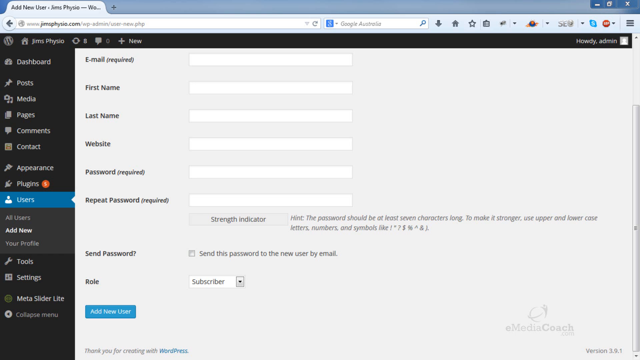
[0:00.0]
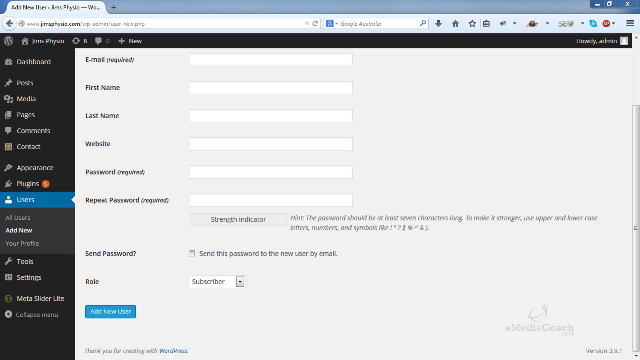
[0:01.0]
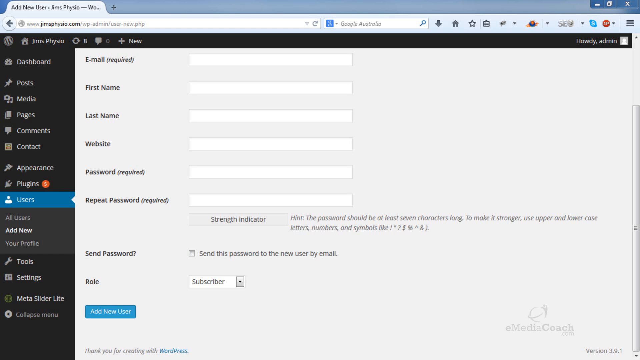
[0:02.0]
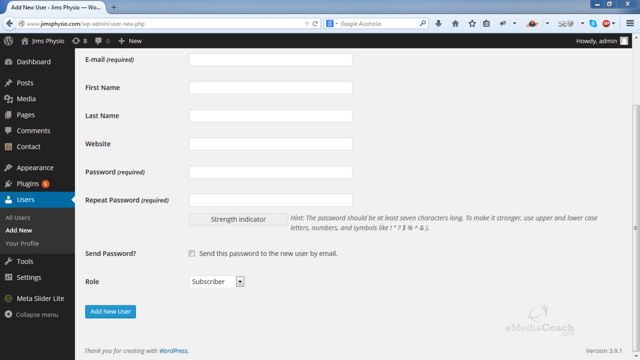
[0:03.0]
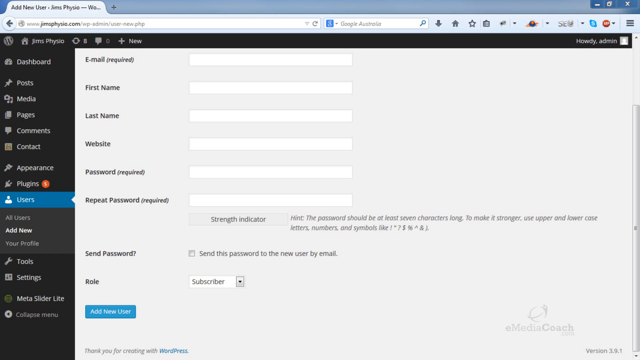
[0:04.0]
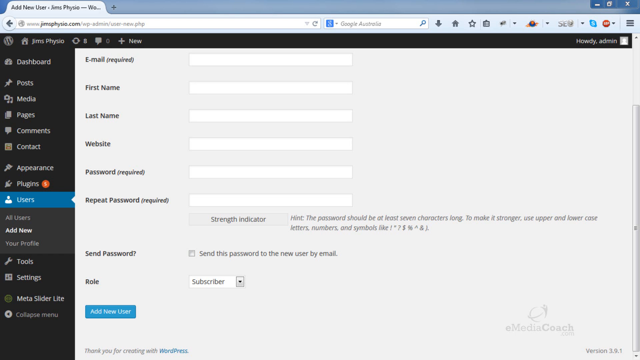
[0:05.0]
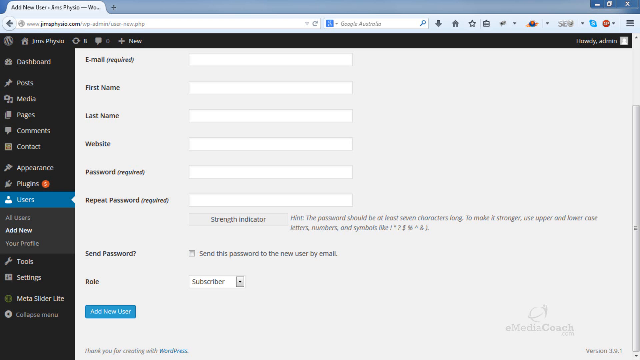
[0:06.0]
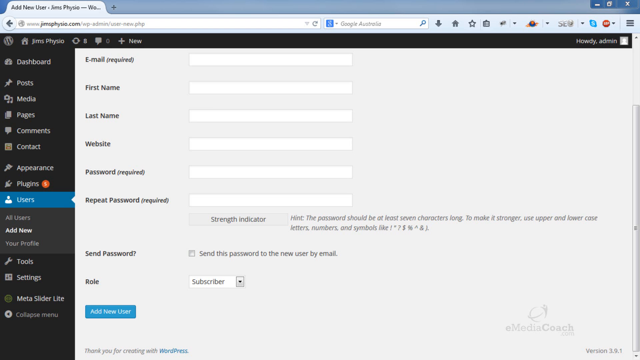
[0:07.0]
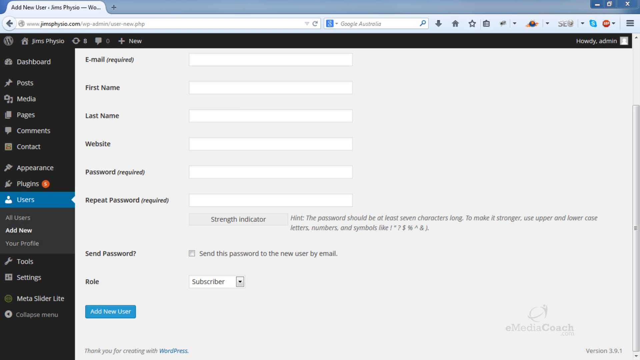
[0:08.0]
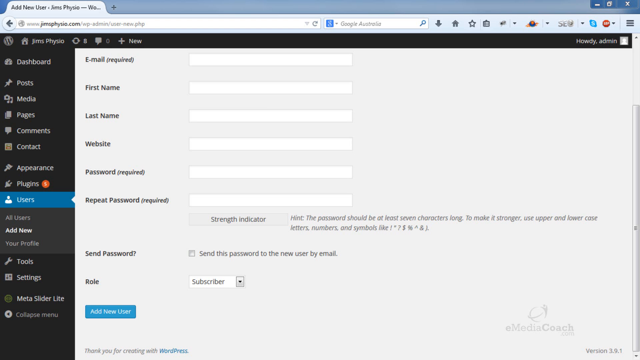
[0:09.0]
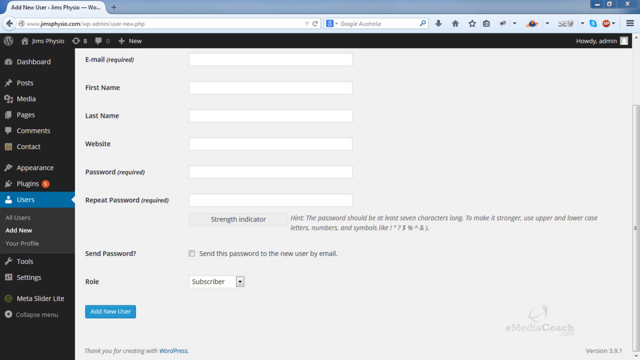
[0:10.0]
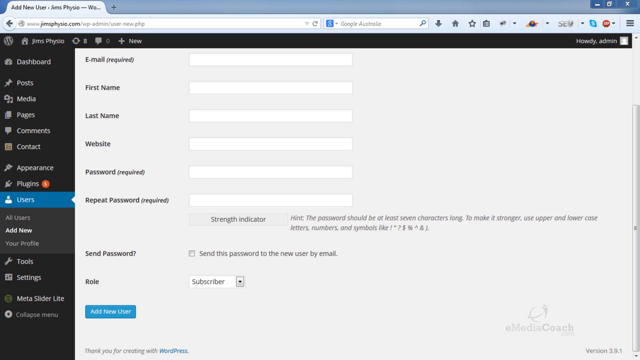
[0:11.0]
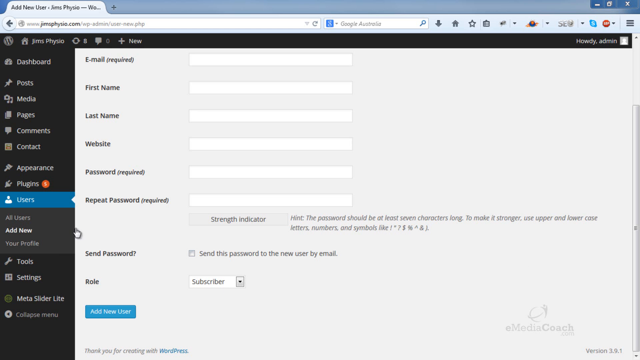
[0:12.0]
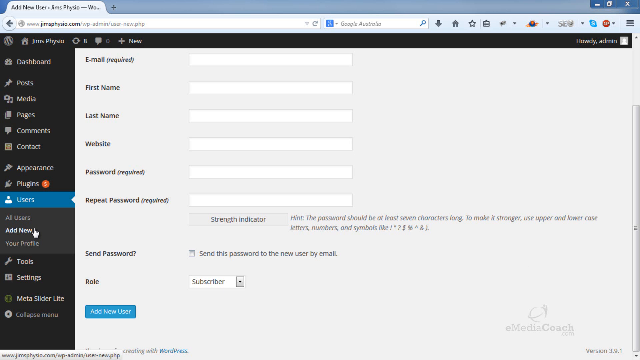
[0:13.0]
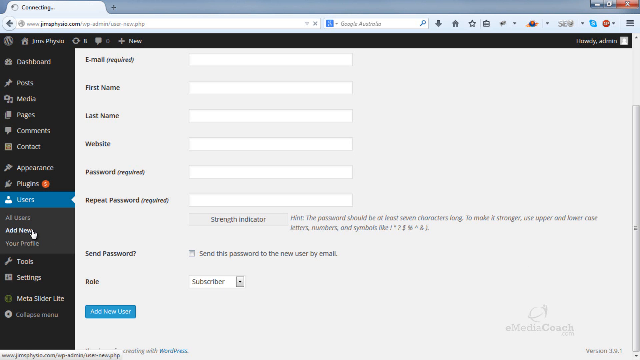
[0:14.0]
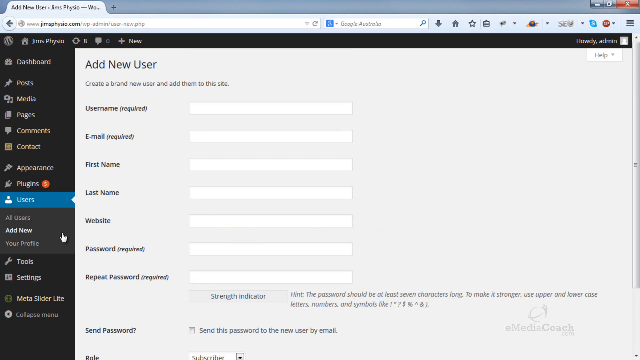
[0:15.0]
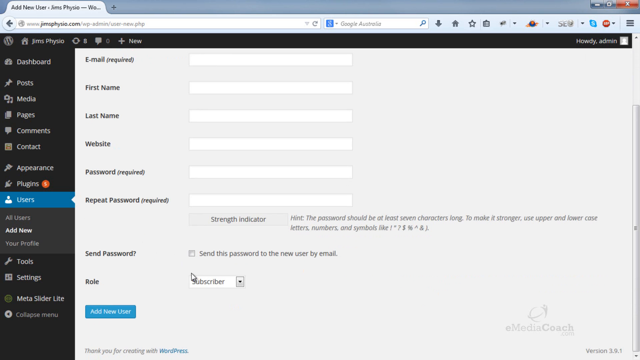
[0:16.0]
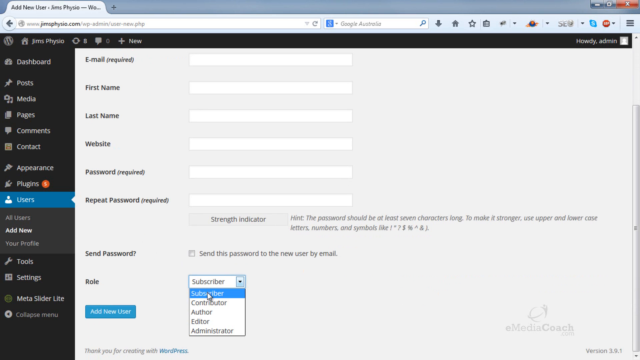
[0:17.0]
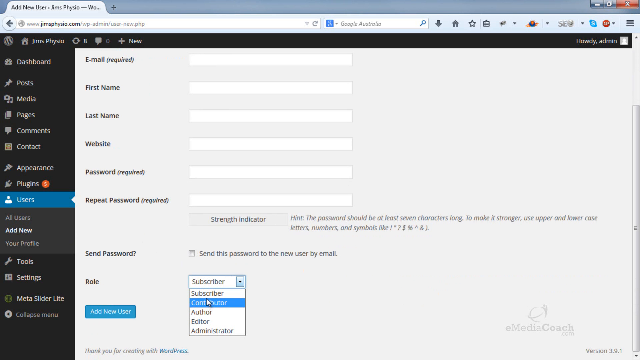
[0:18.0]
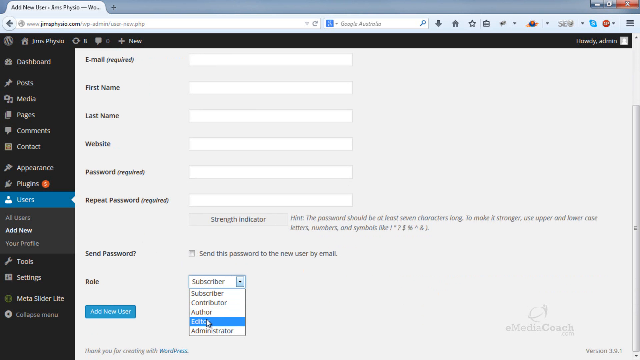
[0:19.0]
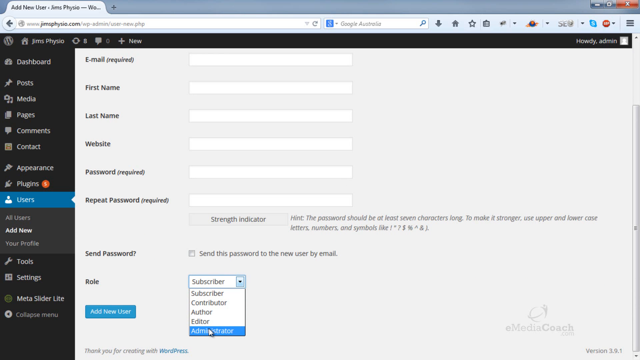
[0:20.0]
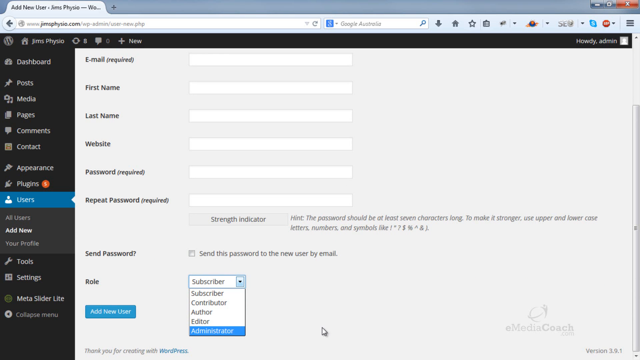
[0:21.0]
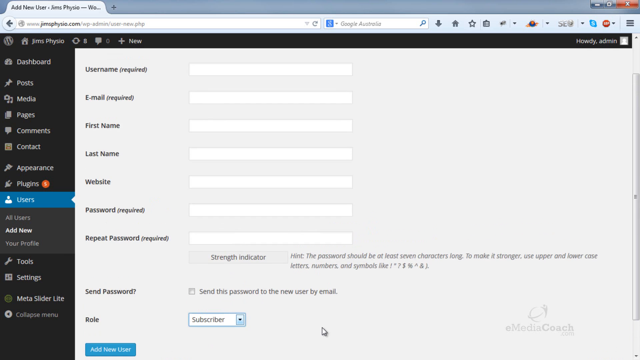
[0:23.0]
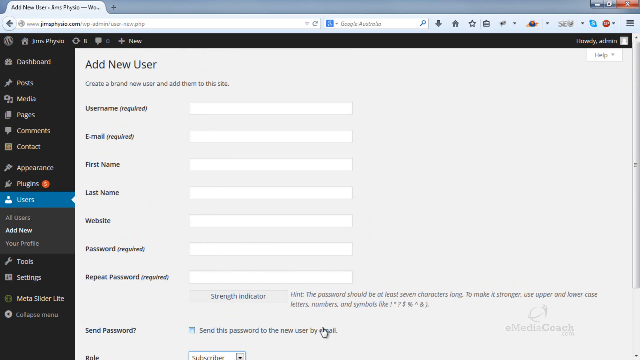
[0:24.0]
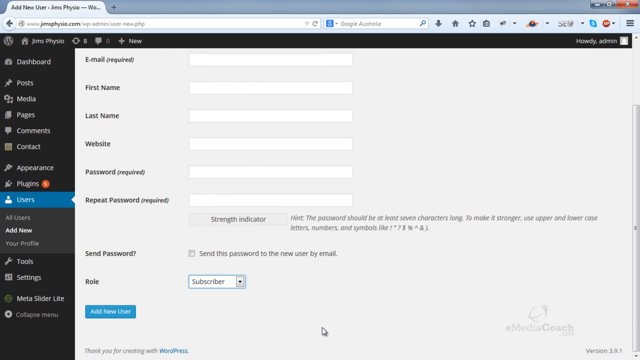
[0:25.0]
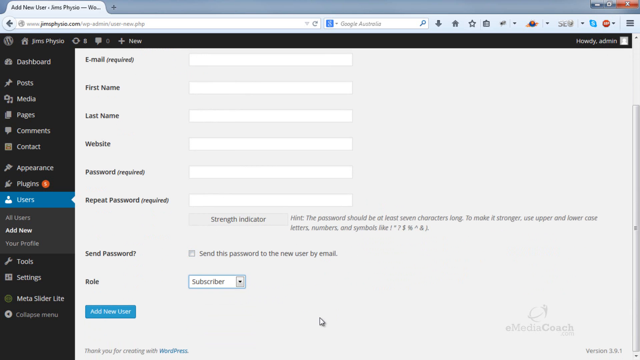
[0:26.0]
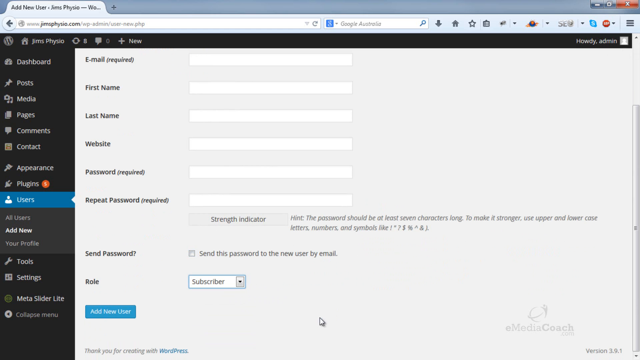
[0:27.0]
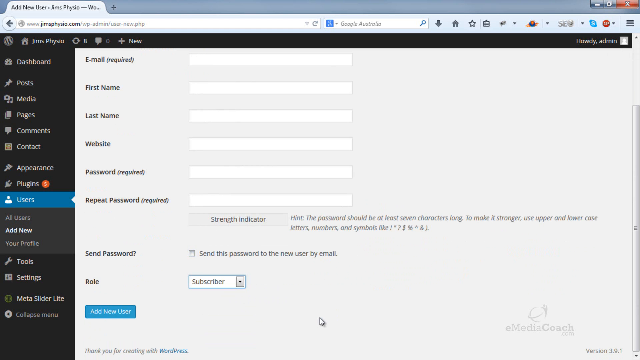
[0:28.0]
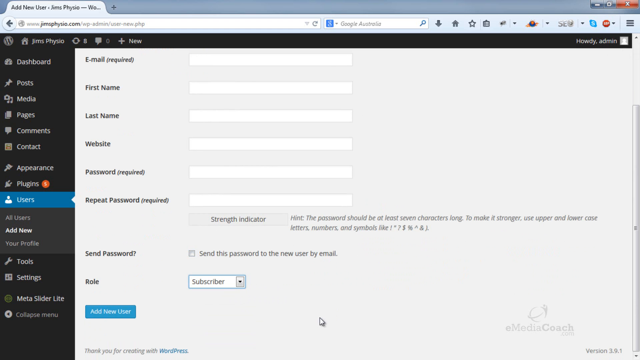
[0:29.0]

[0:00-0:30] The text on screen is small and blurry. It appears to be a website whose name is unreadable, though it seems to contain the letters P-H-Y. On the left-hand side, in white, a menu lists "dashboard, posts, media, pages, comments, contact", possibly "appearance", then "plugins" and "users"; "users" is the section the person is on and it is highlighted blue. Below it are "all users, add new, your profile", tool settings and "meta slider", followed by a last word that cannot be read. To the right is a form reading "email, required, first name, last name, website, password, required, repeat password, required, send password, role", with the role listed as "subscriber". The mouse rolls over what appears to say "add new". The person scrolls down and clicks on the role area, pulling down the dropdown to see the other options, and then leaves it on subscriber.